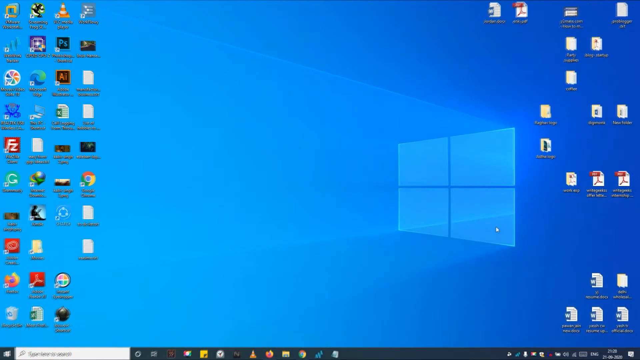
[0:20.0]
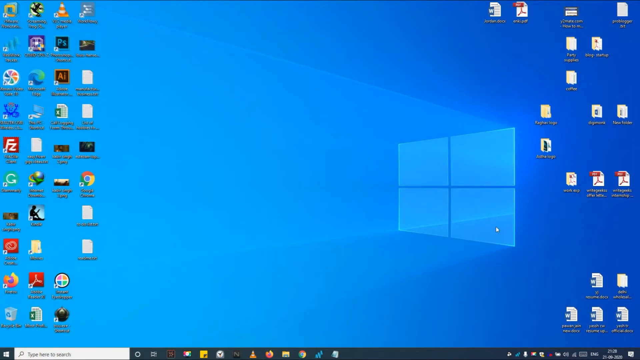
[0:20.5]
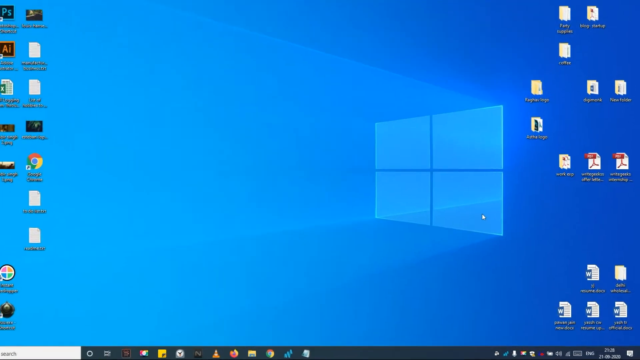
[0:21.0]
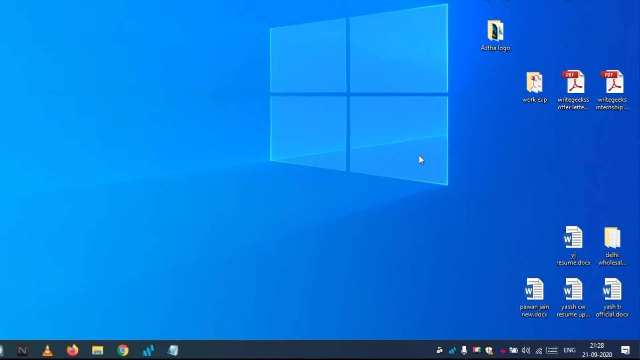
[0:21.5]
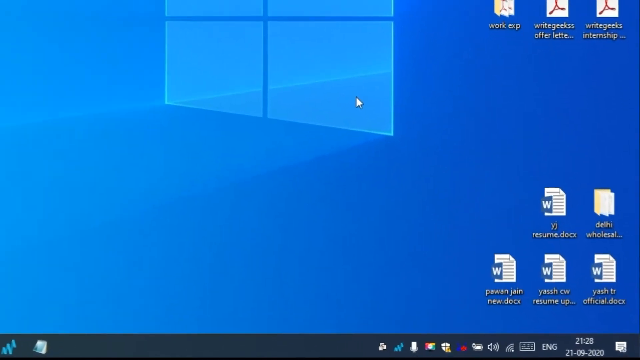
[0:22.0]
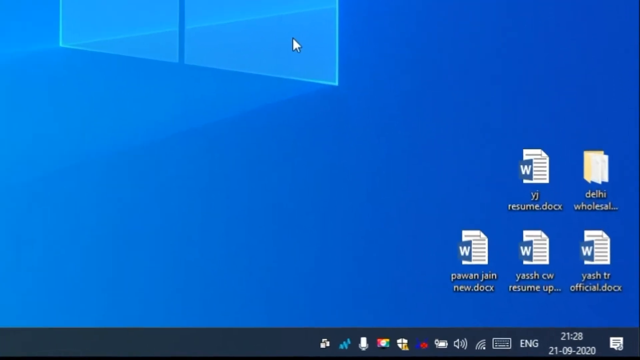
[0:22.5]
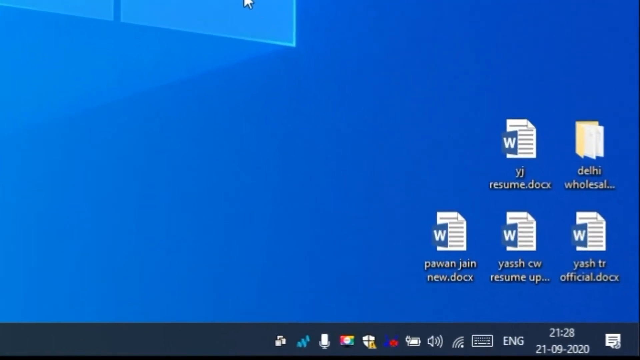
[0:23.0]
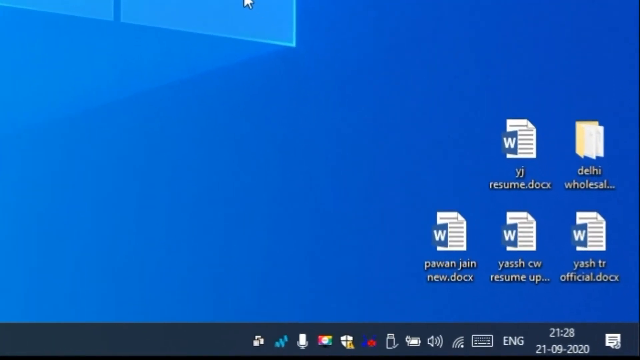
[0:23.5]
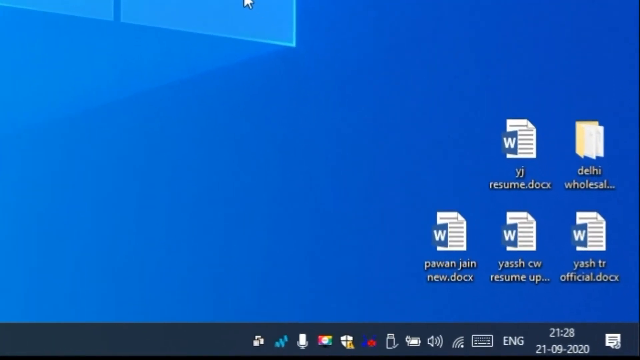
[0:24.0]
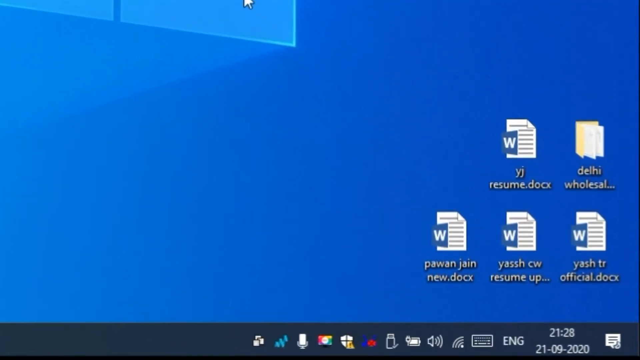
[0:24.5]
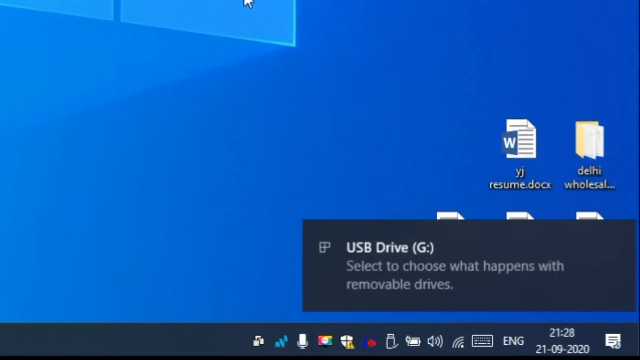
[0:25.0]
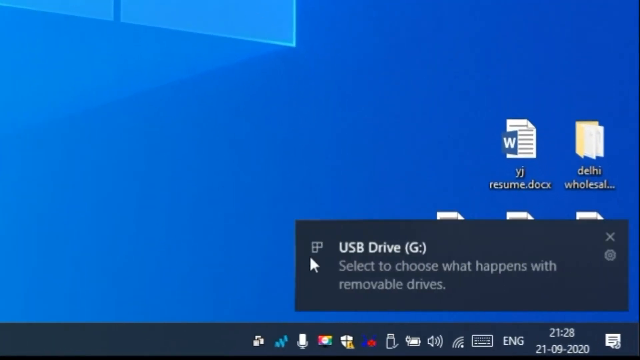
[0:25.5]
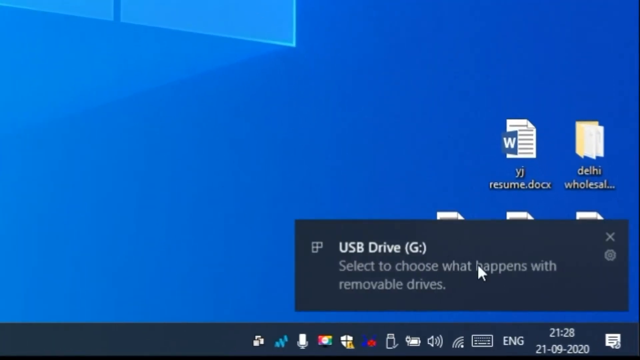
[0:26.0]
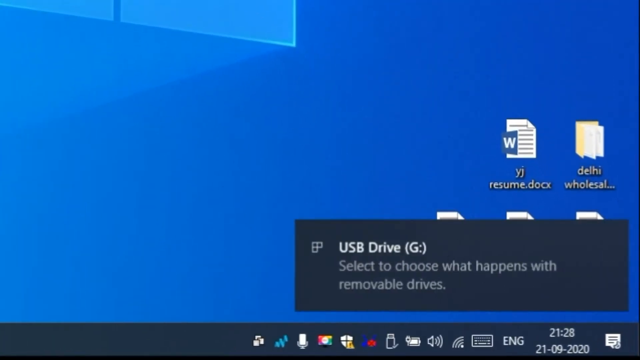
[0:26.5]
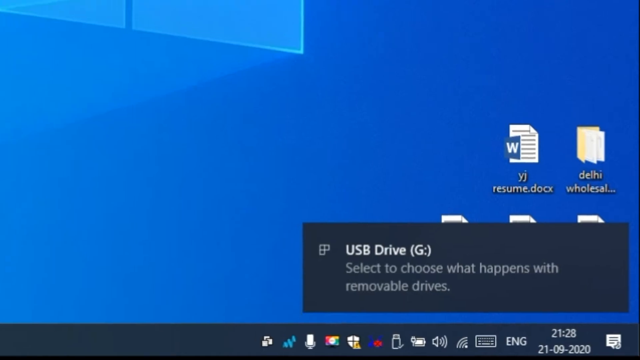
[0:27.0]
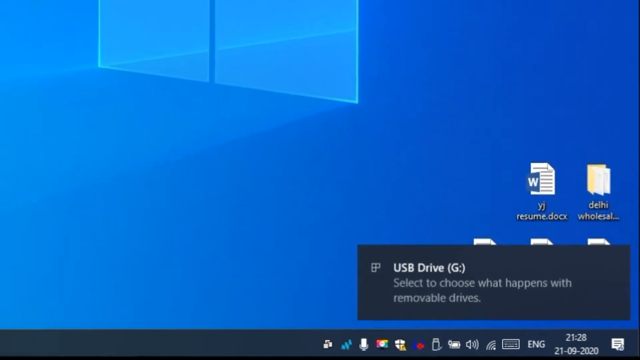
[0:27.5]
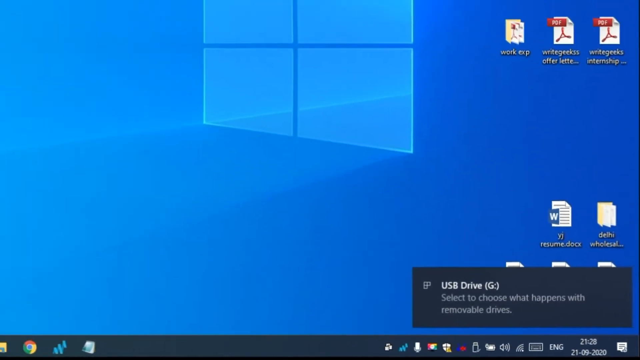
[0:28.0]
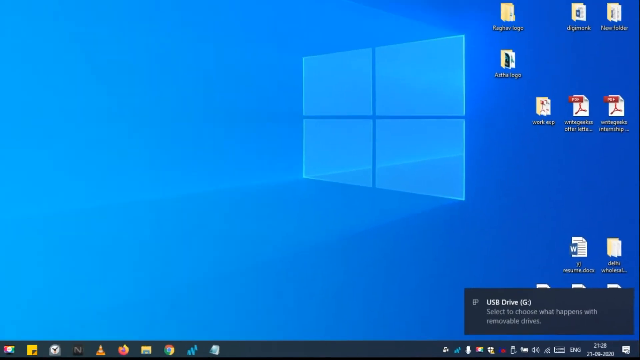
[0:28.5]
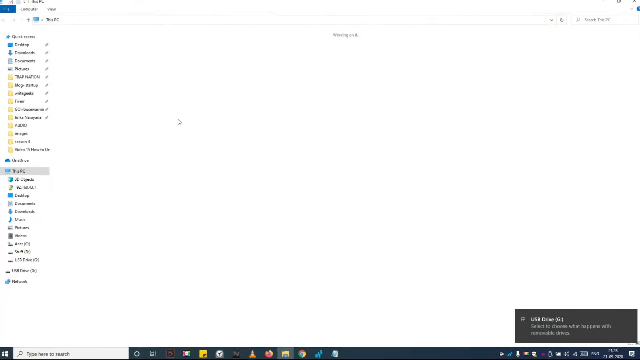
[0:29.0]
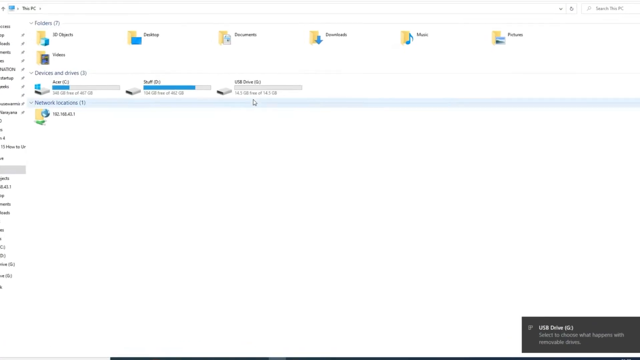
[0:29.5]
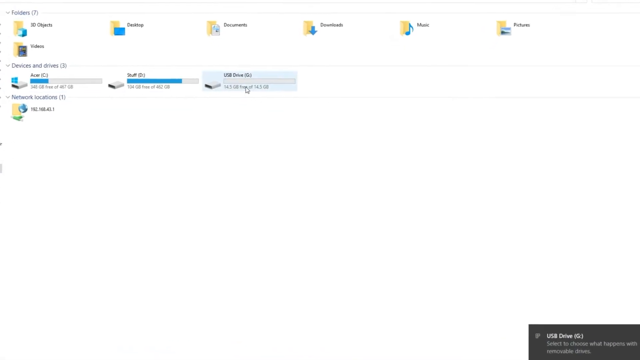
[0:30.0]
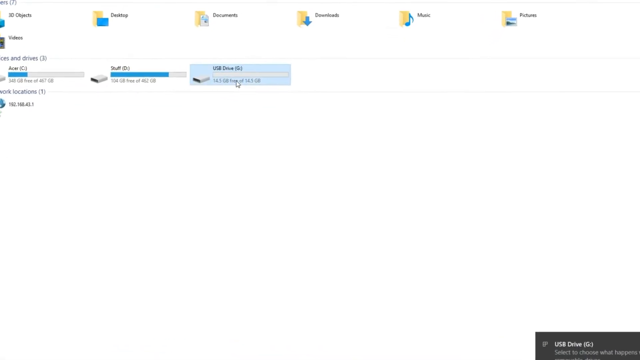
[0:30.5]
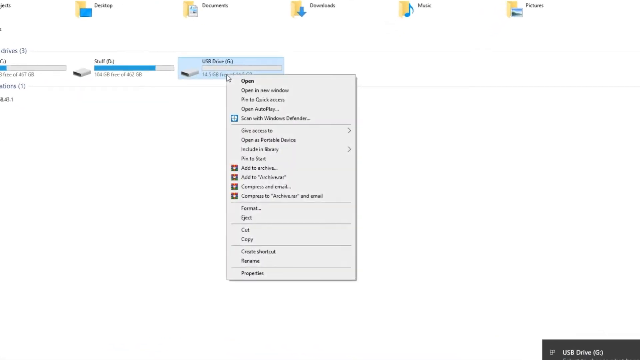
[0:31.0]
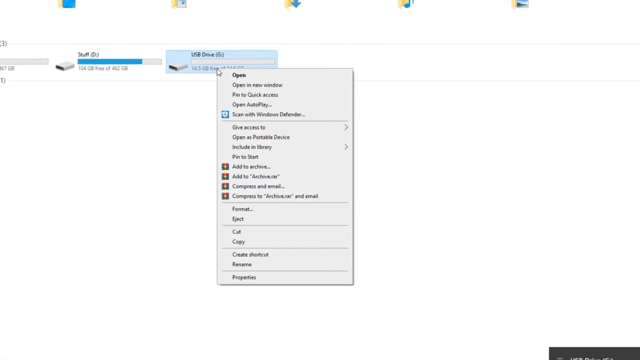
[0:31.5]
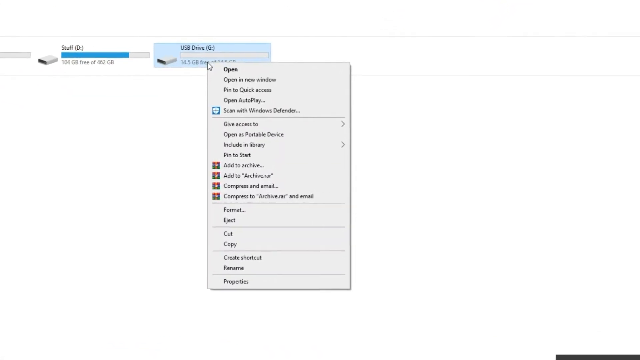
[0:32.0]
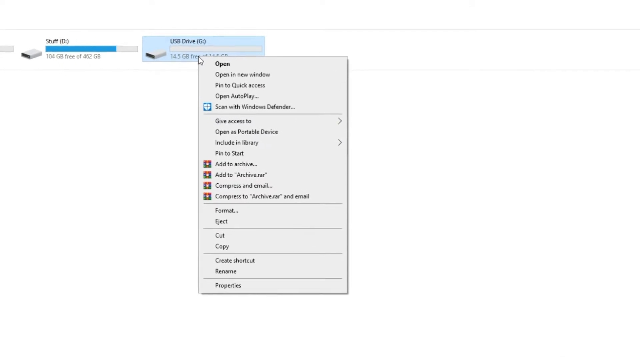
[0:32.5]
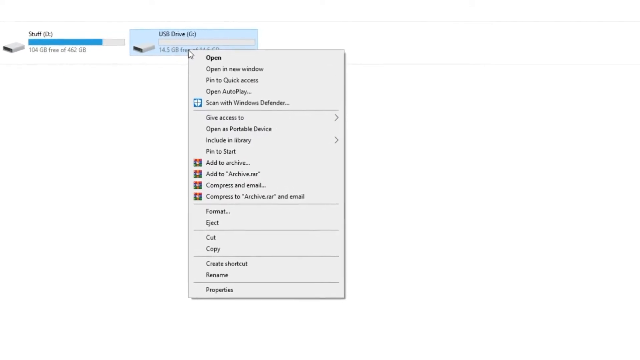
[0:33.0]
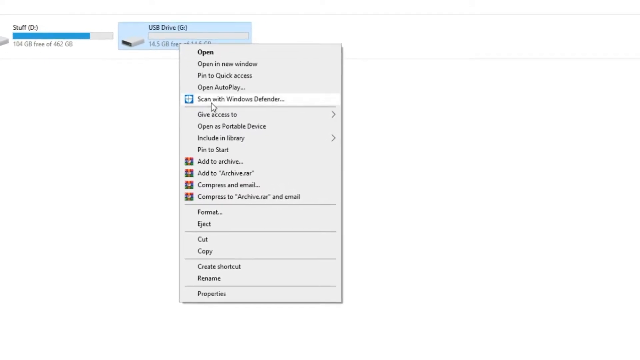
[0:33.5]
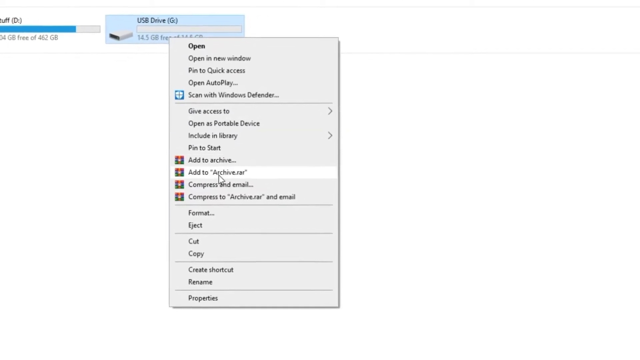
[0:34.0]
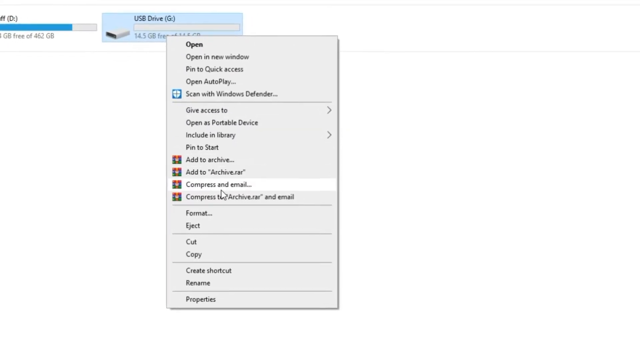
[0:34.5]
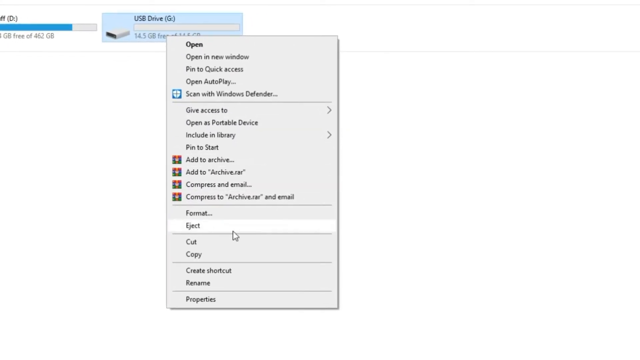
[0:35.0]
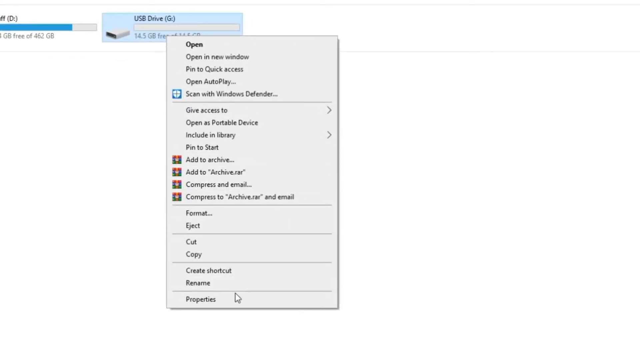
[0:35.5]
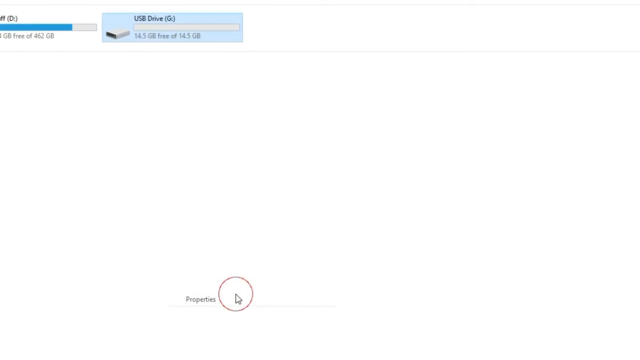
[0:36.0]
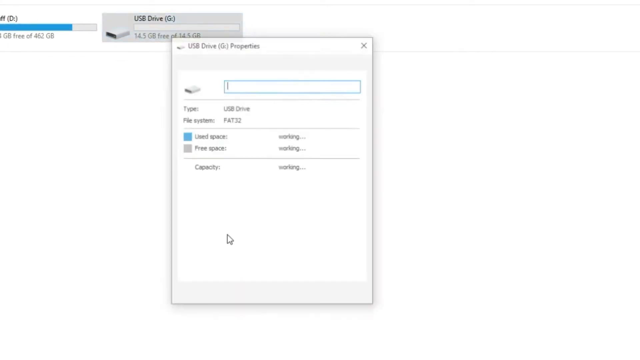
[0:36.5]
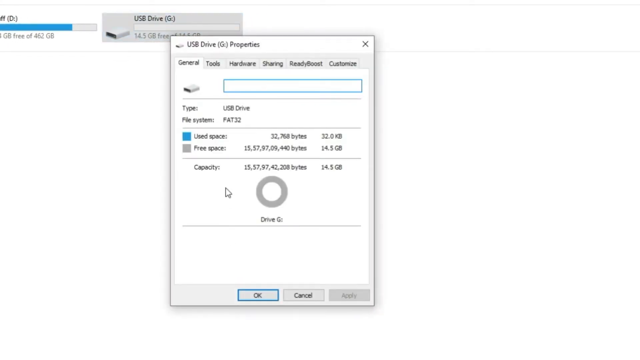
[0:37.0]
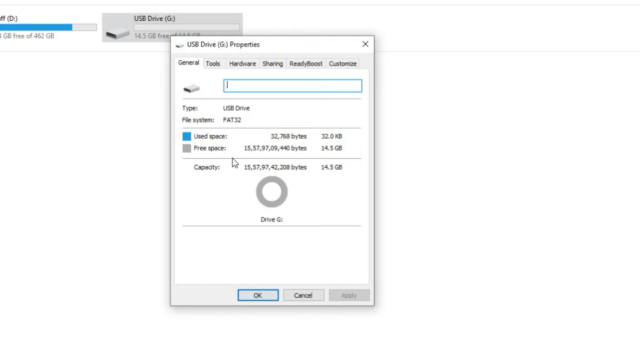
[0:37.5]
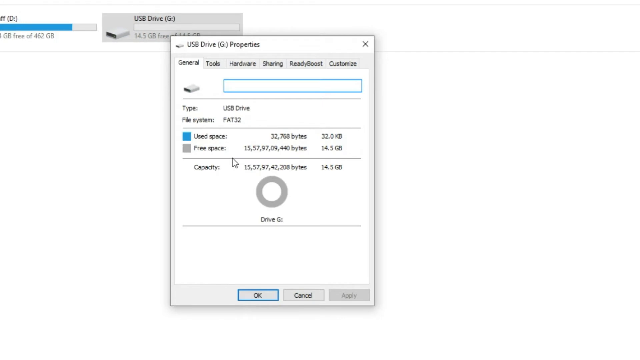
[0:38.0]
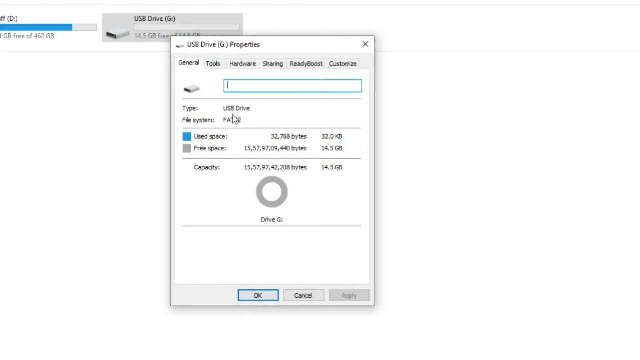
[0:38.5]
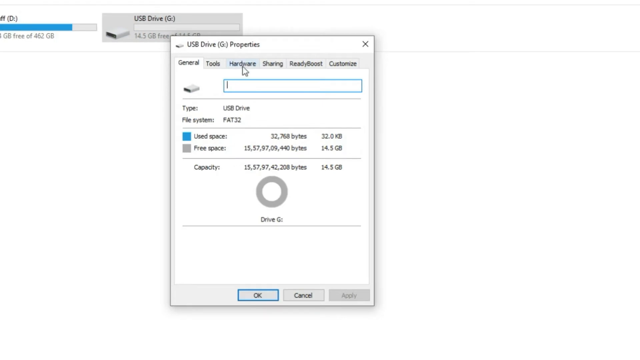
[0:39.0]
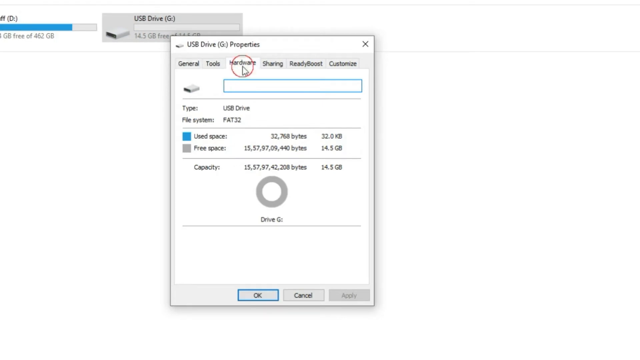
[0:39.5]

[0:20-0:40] A computer screen shows a USB Drive in close-up, with the view zooming in and out on the screen. The person clicks on the USB device drive G, with the option "select to choose what happens with this," then clicks on the USB Drive and goes down to Properties. The General tab is shown, and then they click on Hardware.